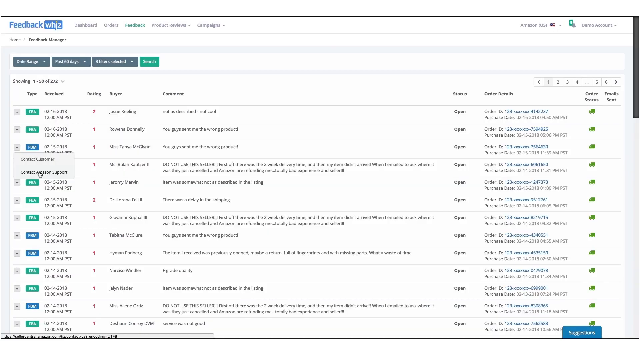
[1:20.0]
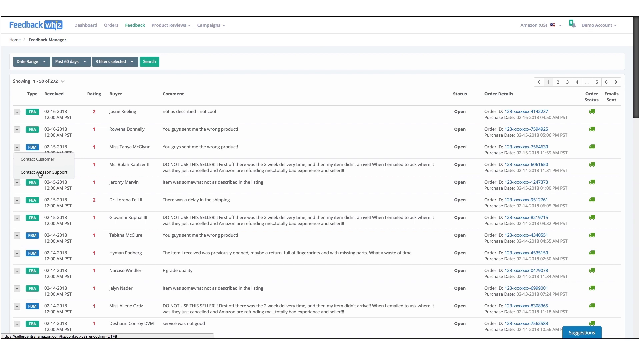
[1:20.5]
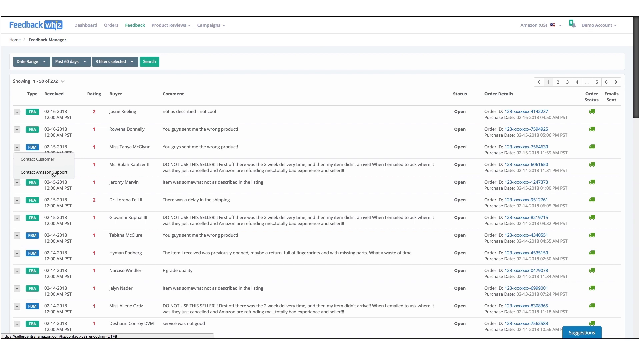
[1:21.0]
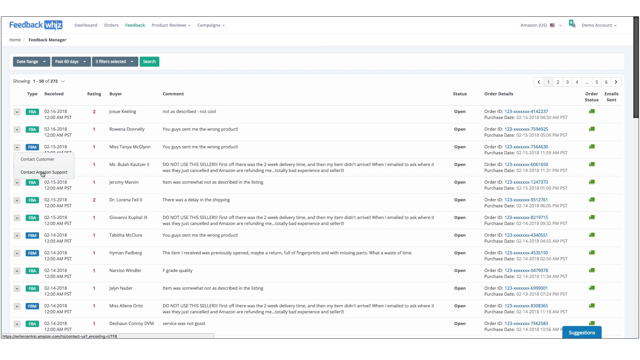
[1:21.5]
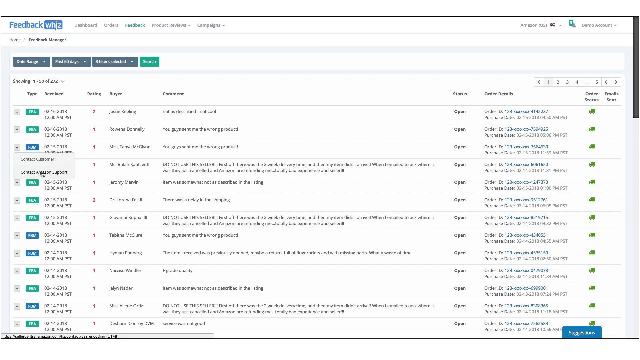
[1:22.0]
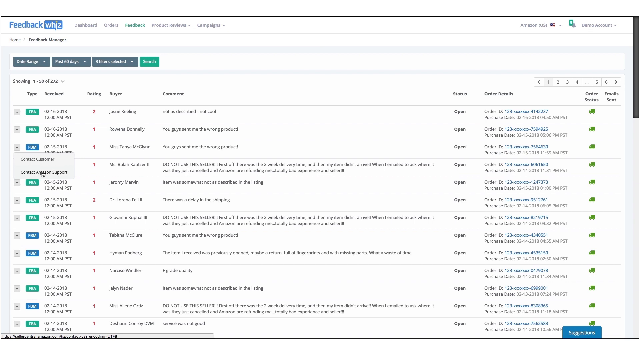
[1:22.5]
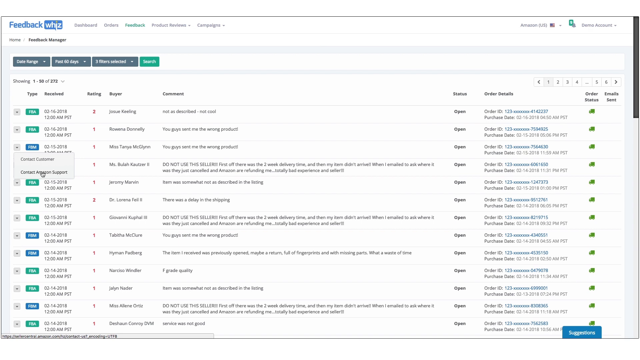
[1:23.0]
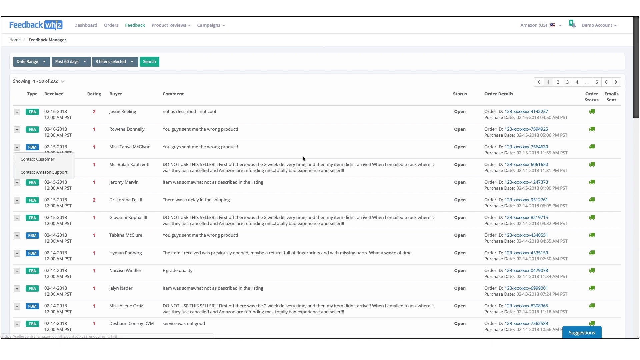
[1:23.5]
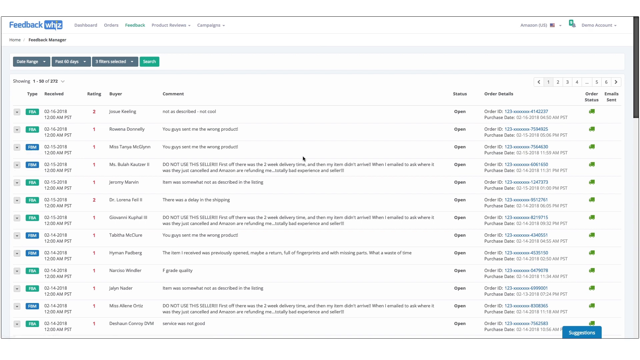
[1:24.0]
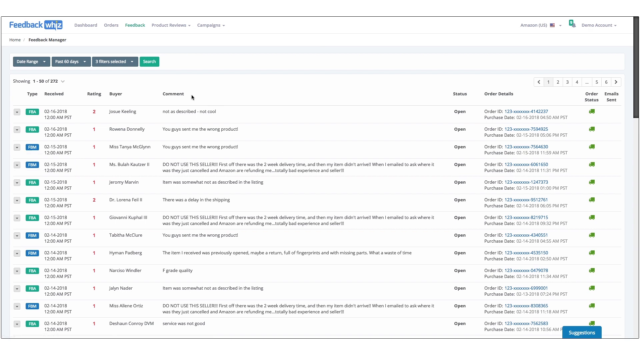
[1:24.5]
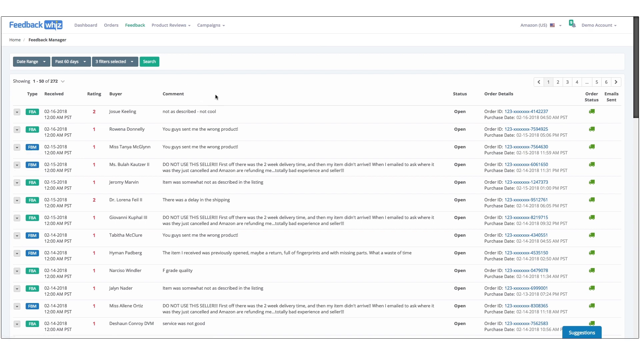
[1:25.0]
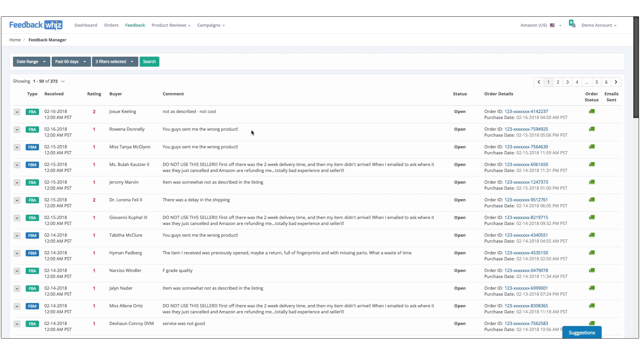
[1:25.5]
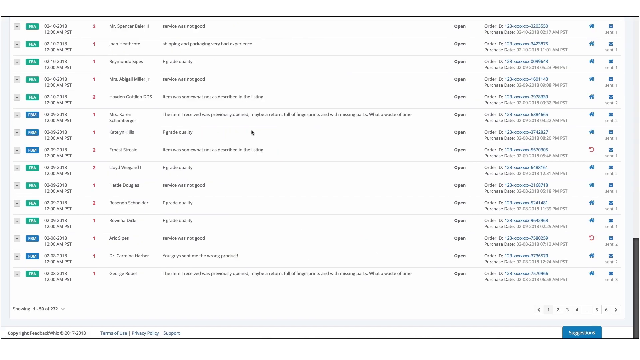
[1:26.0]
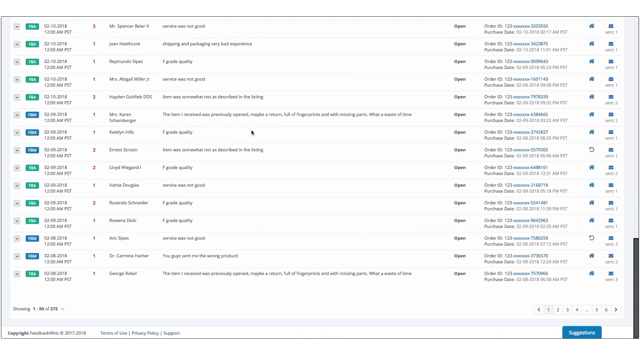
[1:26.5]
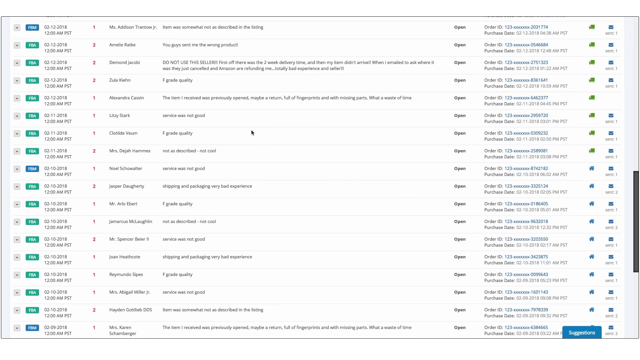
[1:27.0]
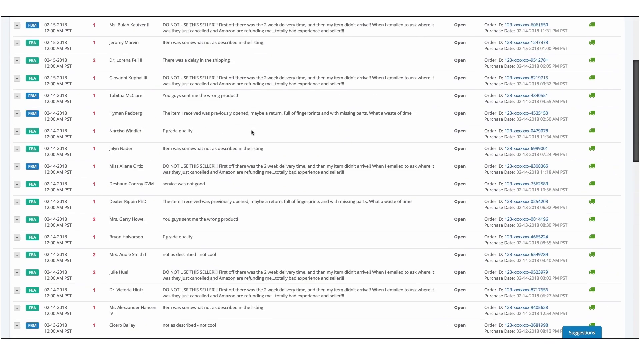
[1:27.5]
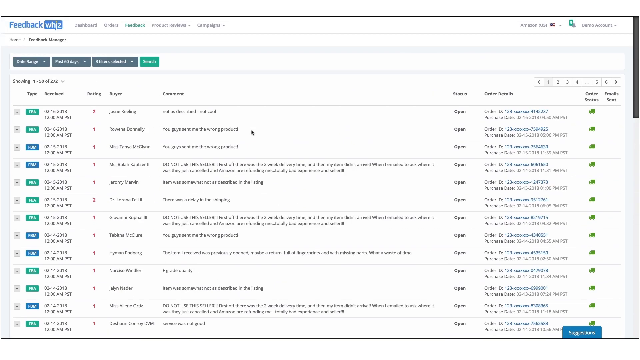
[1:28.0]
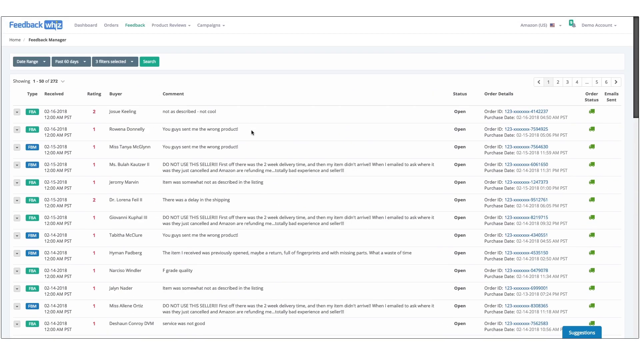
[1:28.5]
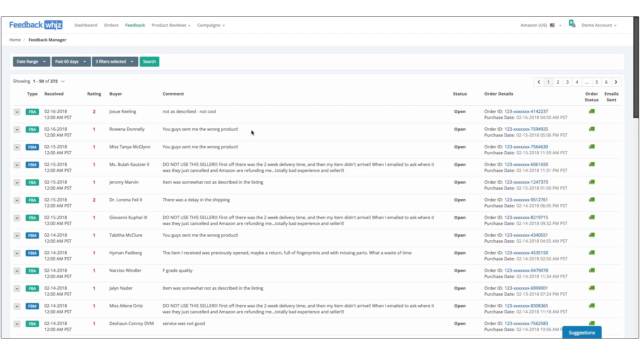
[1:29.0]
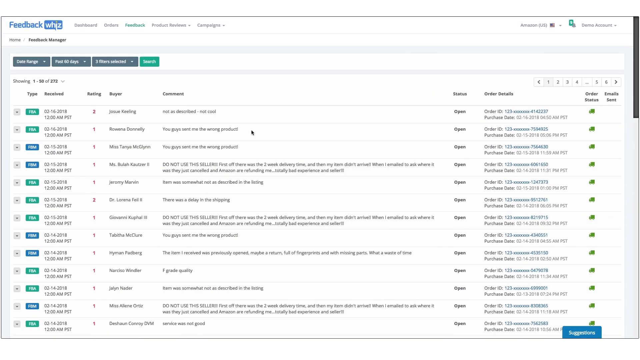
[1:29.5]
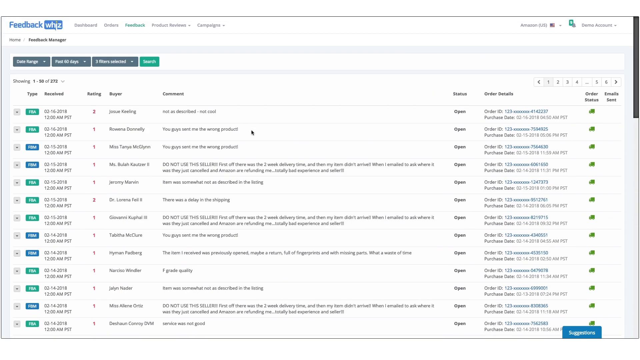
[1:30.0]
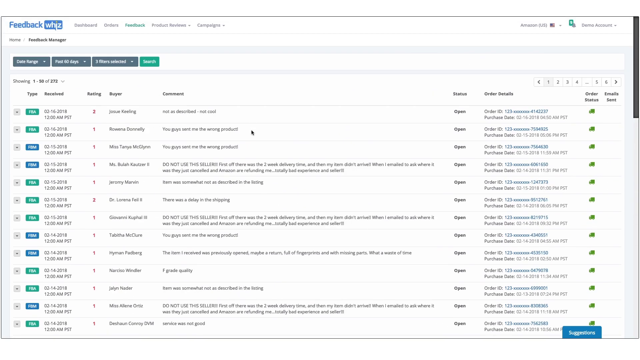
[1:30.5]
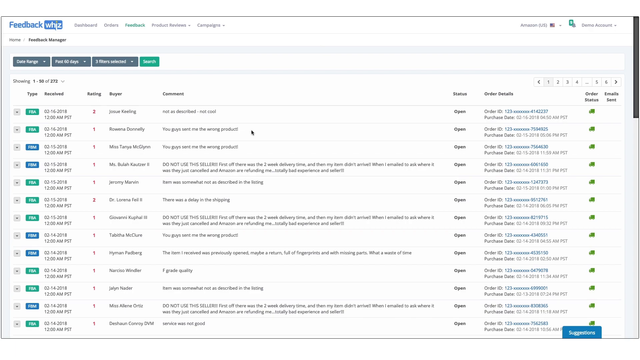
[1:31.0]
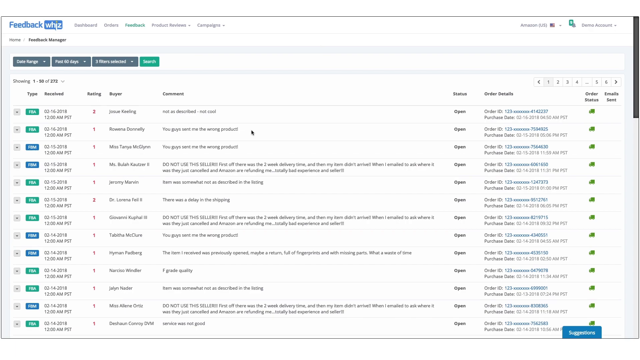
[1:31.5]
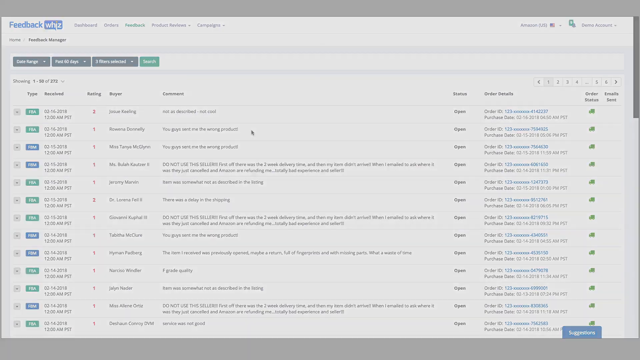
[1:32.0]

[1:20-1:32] The demonstrator scrolls down the same page listing all the orders with their date received, and shows the sorting options: past 90 days, past 60 days, and ratings such as 1 or 2. The order details include a clickable order ID number. The email section for reviewing sent emails is shown, then the view goes back to the far left-hand column with the option to contact the customer, where a template can be picked, previewed and sent as an email. A contact support option is also shown.